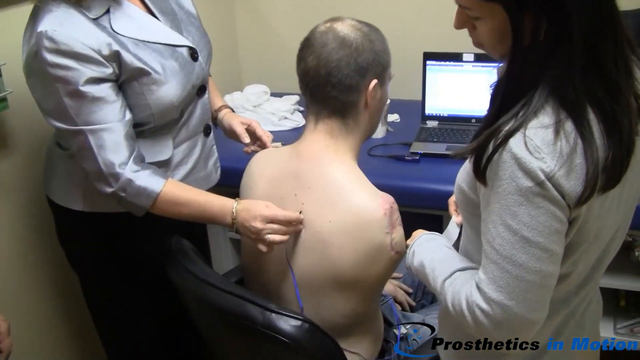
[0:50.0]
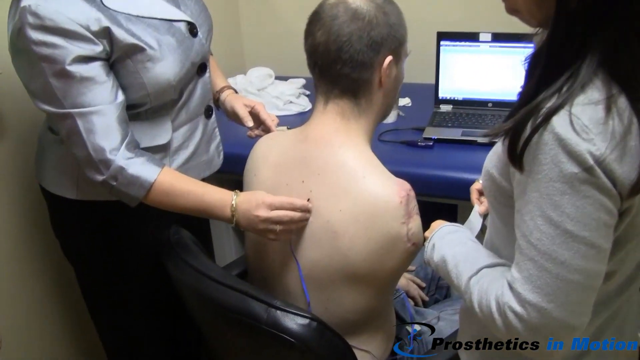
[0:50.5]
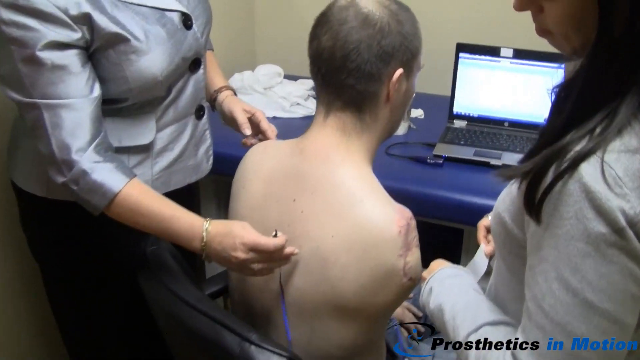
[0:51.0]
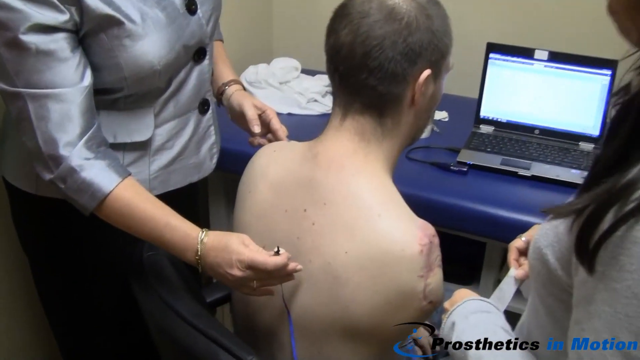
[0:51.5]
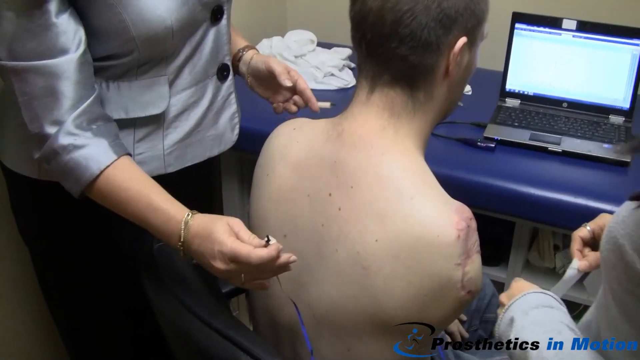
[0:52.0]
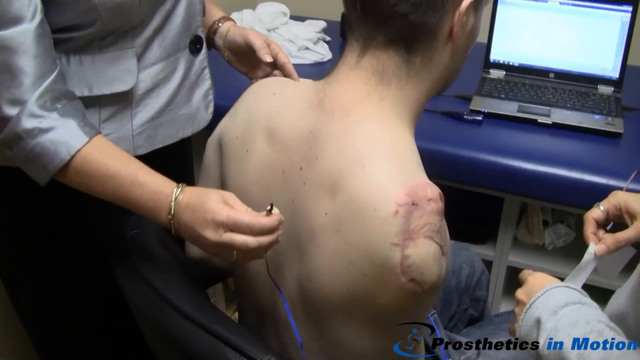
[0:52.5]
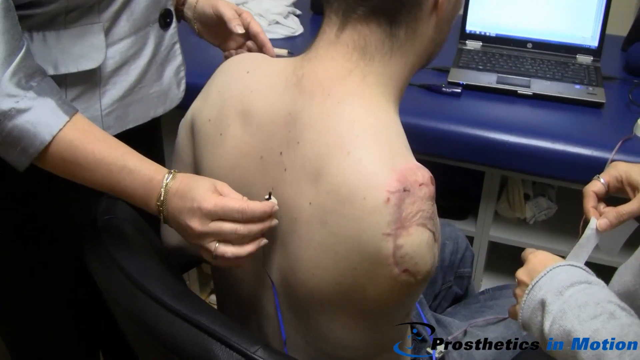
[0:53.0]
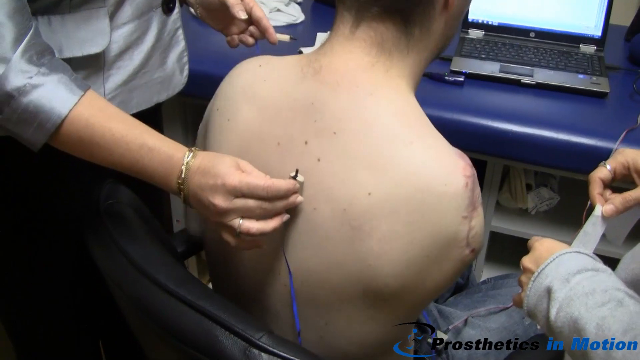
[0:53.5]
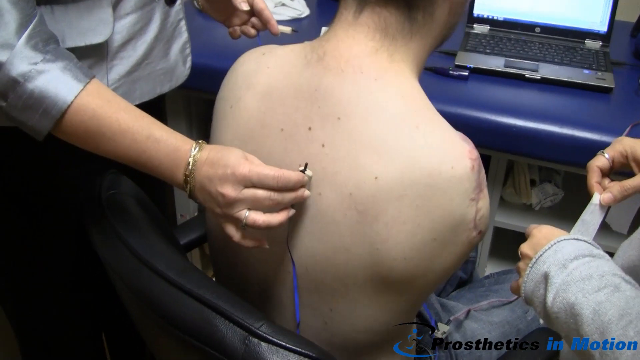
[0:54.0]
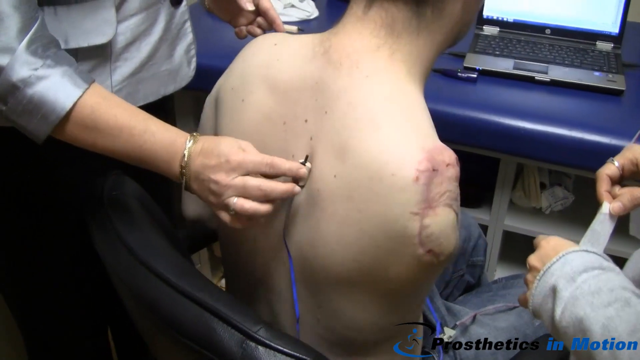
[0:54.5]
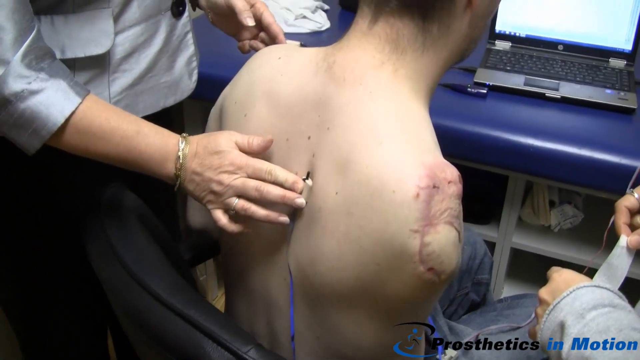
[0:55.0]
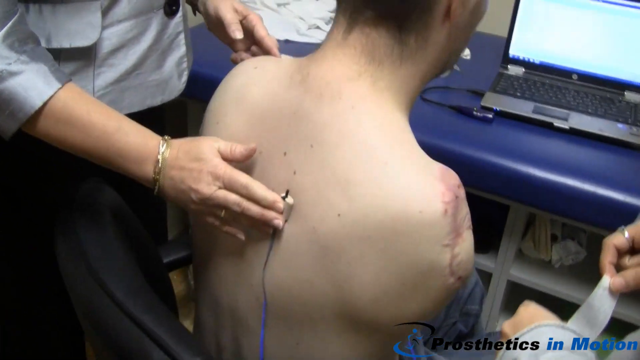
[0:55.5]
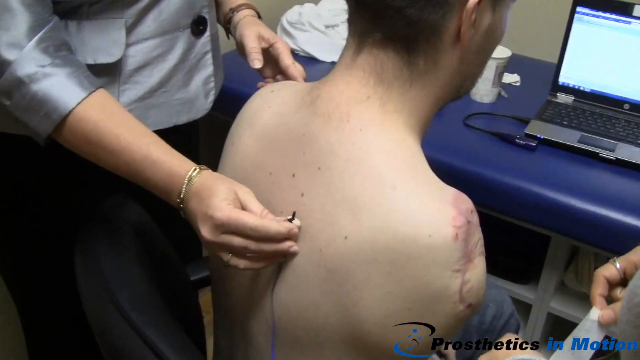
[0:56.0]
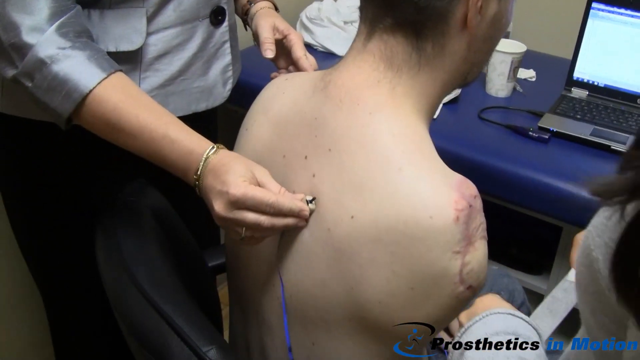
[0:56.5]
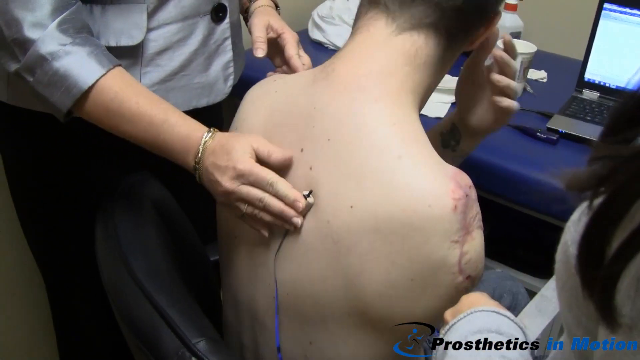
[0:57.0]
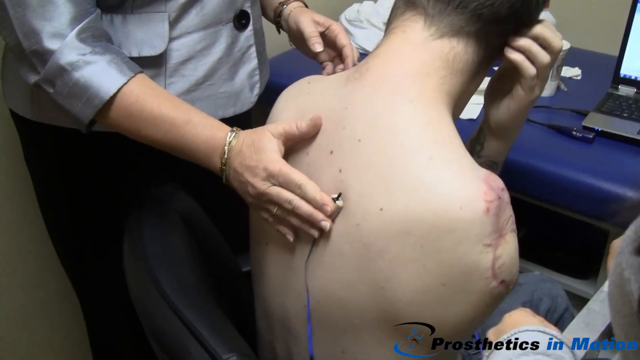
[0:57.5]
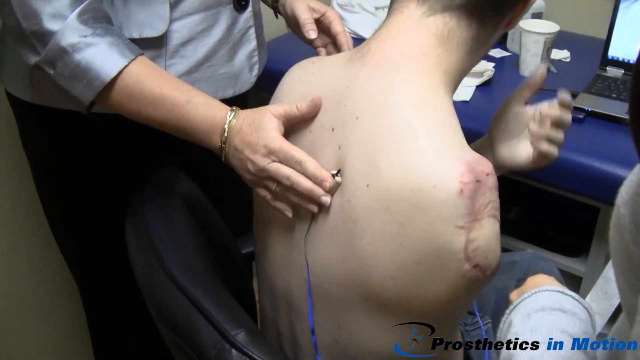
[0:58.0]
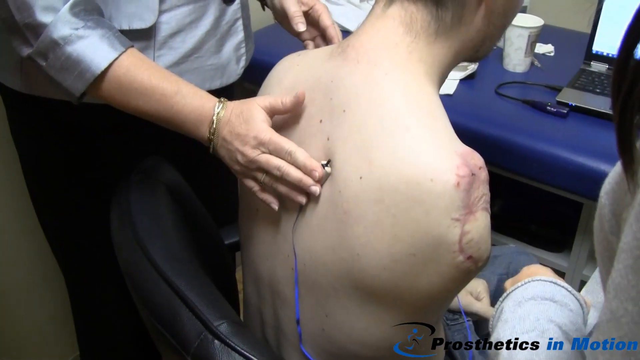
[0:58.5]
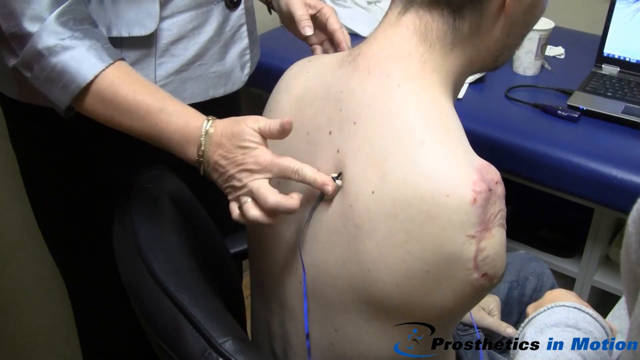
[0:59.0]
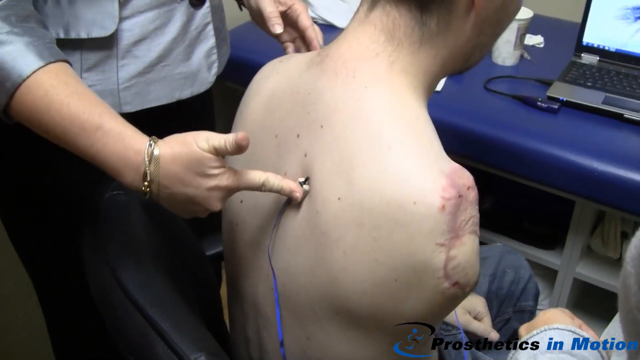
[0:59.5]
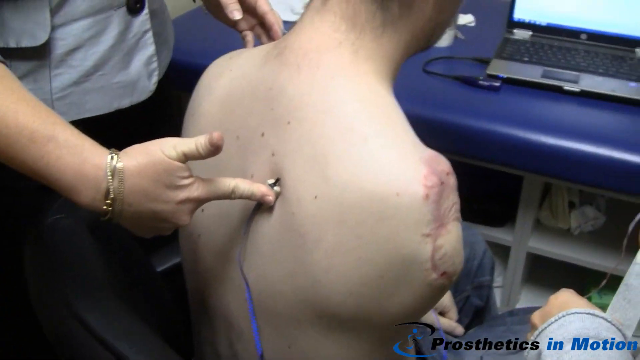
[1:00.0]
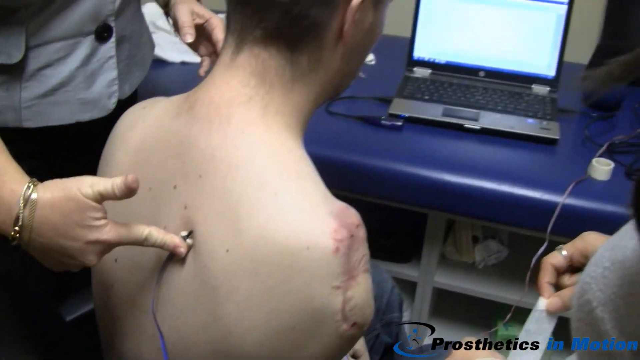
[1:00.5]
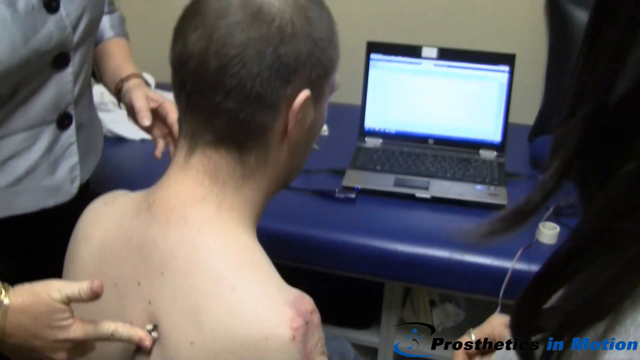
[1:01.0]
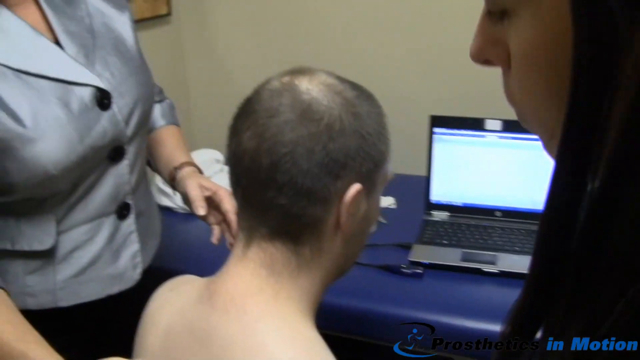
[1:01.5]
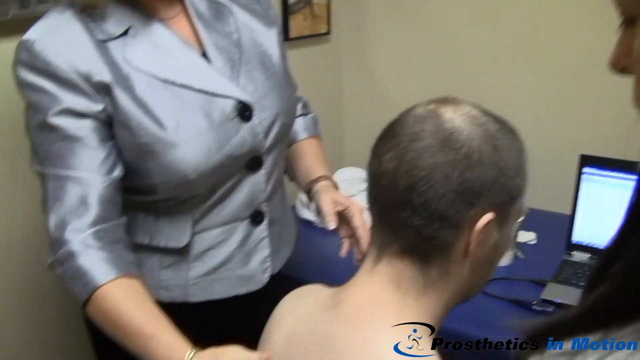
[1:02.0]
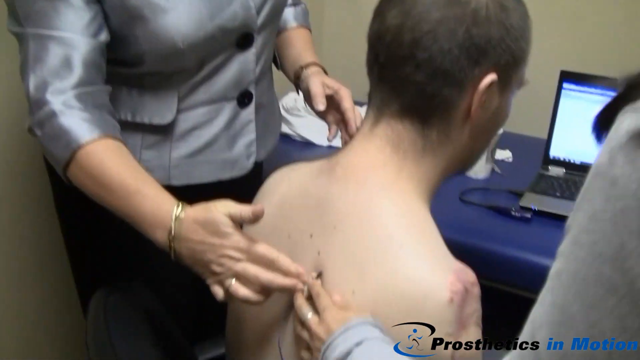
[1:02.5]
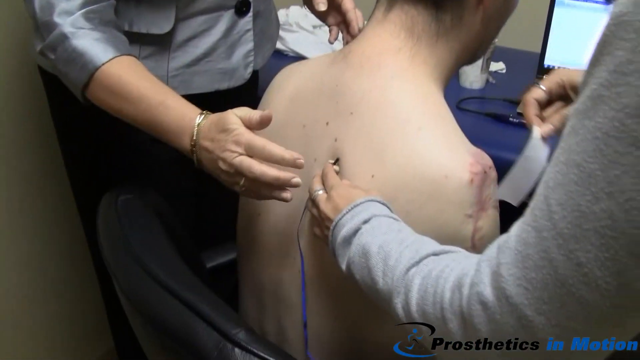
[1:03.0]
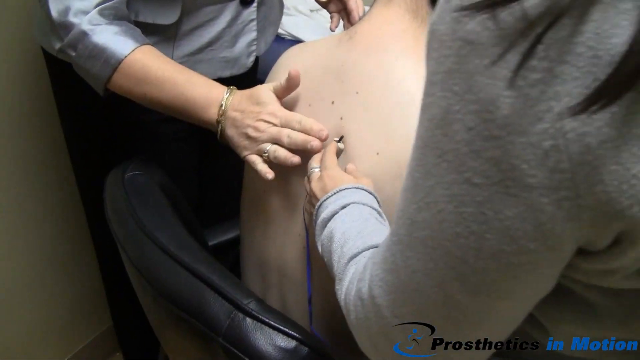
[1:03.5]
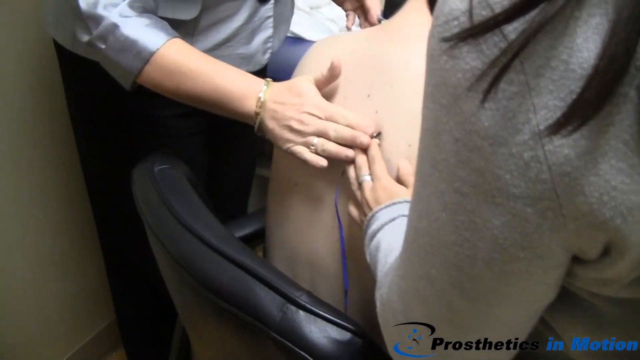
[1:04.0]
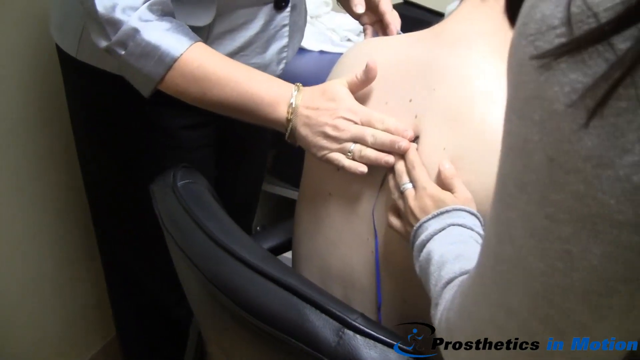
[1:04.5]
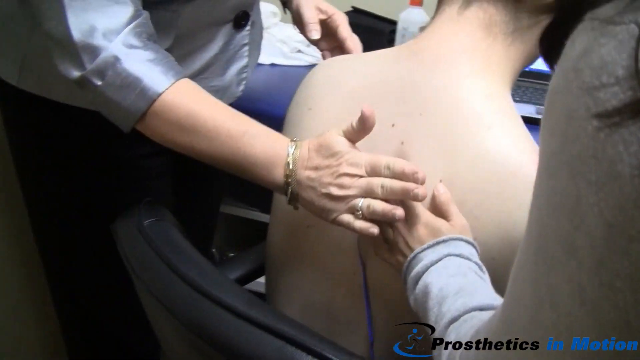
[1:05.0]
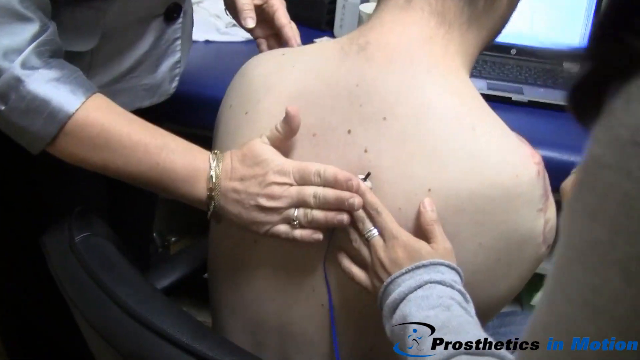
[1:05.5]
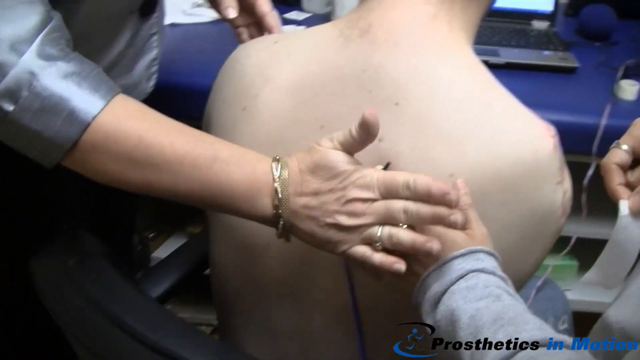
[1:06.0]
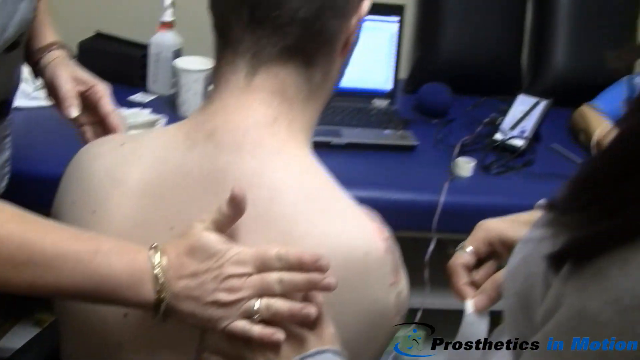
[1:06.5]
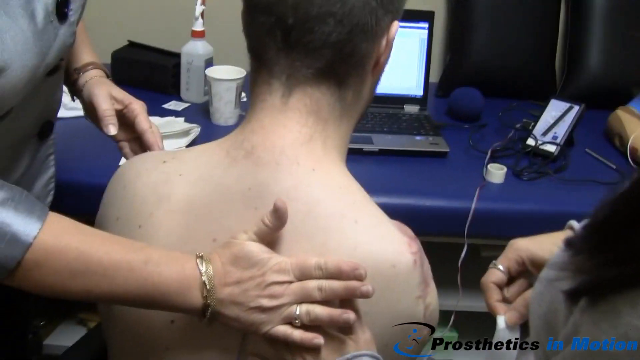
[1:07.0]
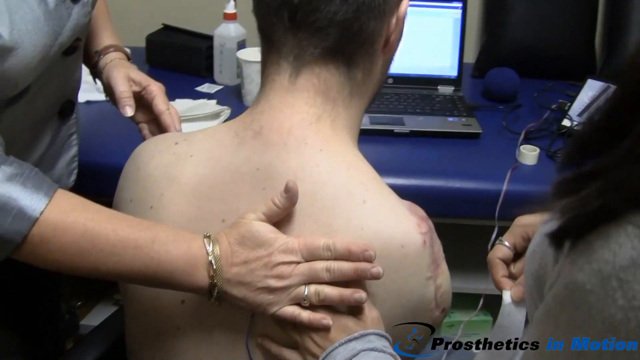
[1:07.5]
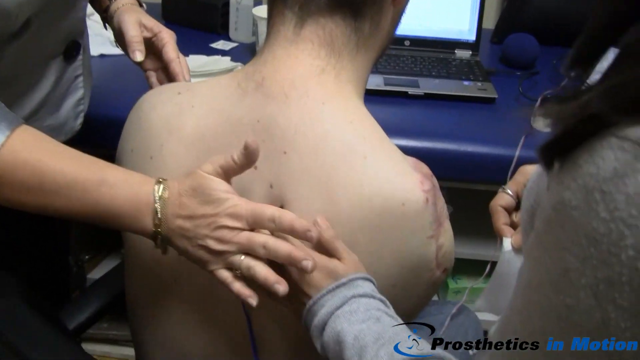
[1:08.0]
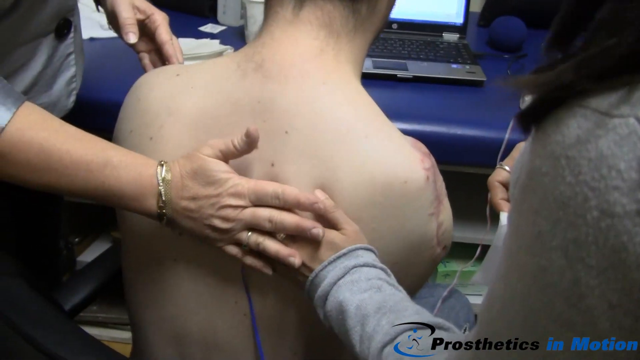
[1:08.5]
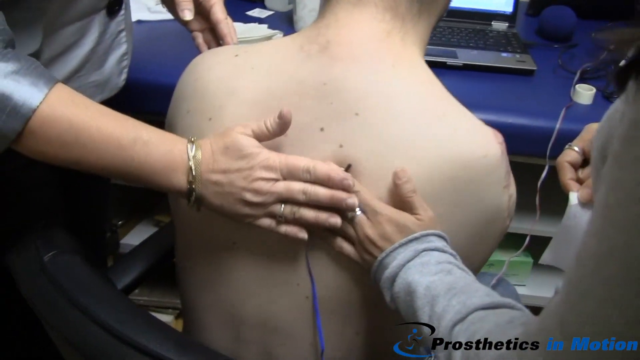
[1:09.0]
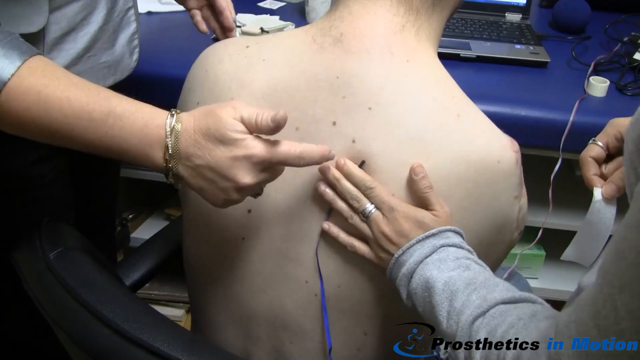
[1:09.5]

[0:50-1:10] In the doctor's office, the doctor in a silver jacket holds an electrode-type item connected by a blue wire. A man is sat with his shirt off, with an amputation at his right shoulder blade. To the right, a woman with long black hair looks on as the woman in the silver jacket moves the electrode. The man flexes his shoulder blades backwards and the woman shows the electrode positioning in the centre of his back. She places it in the gap between the flexed shoulder blade where the spine is, rotates it slightly at an angle, and presses quite firmly so that the top of the electrode point is pointing towards the top edge of the shoulder blade. The laptop is visible on the blue desk. The woman with long black hair then puts her fingers on the electrode and the woman in the silver jacket releases her hand, then also presses down with the palm of her hand onto the fingers of the woman with long black hair.